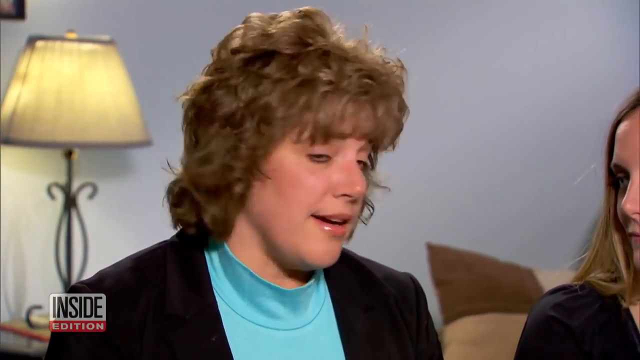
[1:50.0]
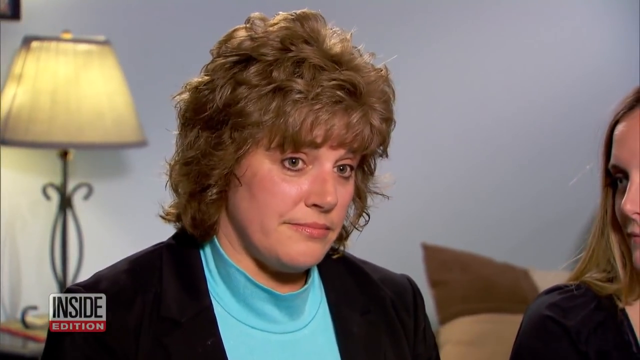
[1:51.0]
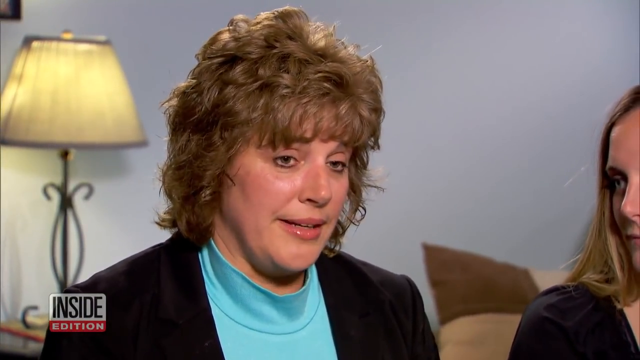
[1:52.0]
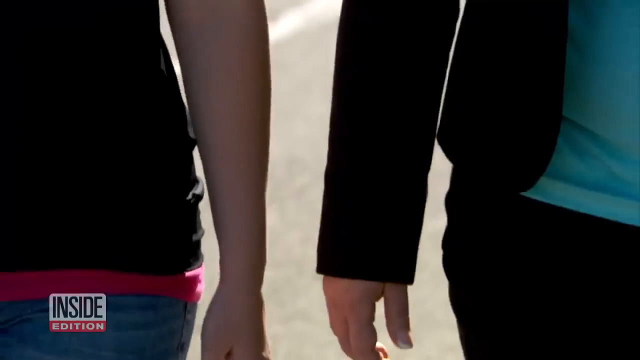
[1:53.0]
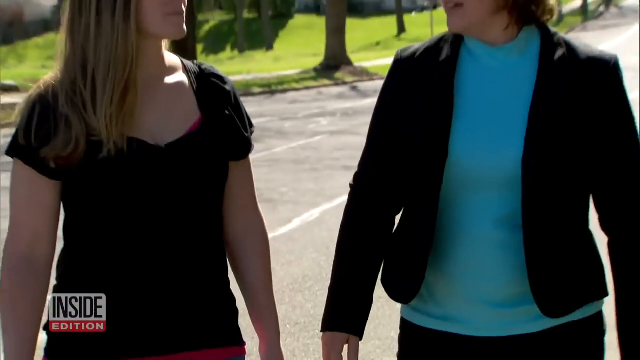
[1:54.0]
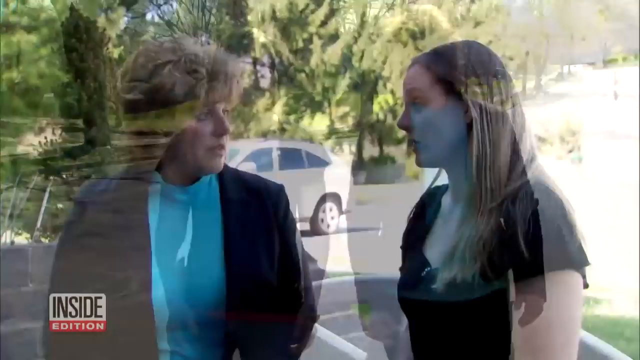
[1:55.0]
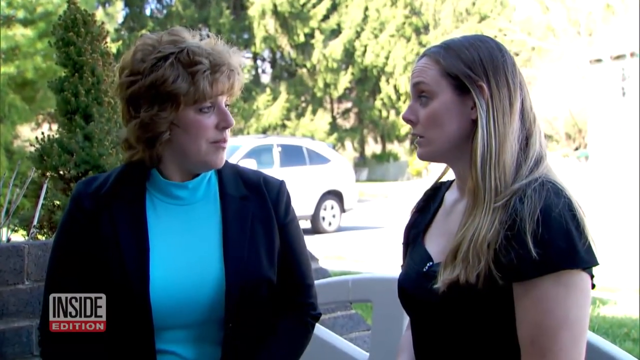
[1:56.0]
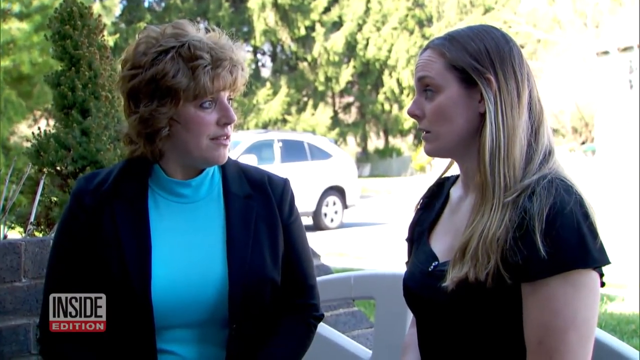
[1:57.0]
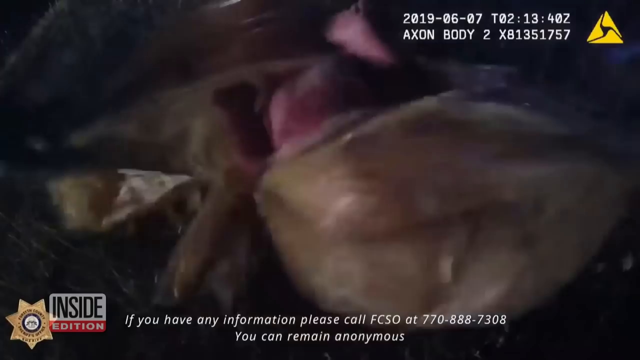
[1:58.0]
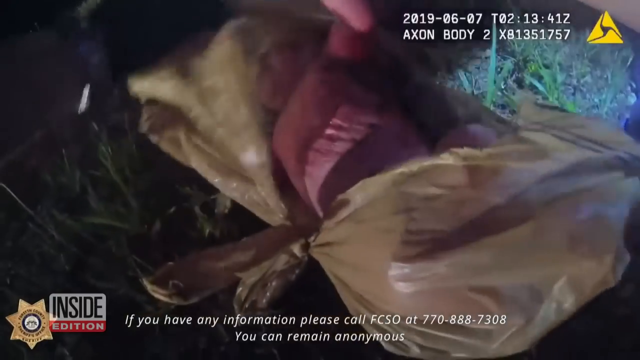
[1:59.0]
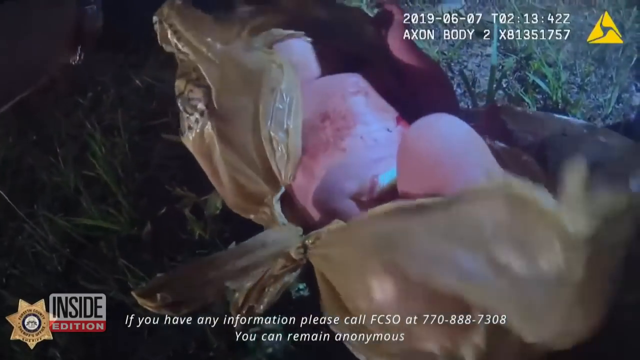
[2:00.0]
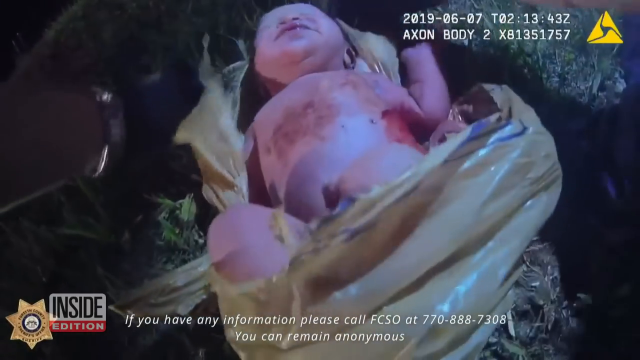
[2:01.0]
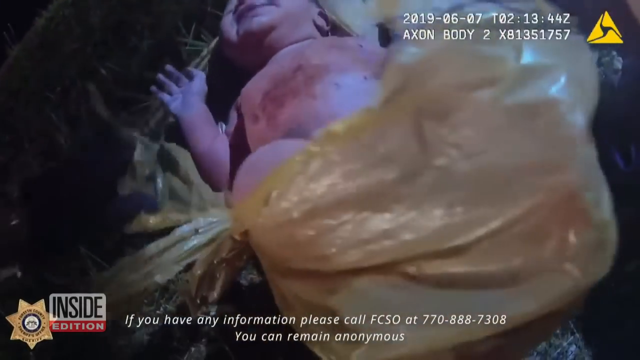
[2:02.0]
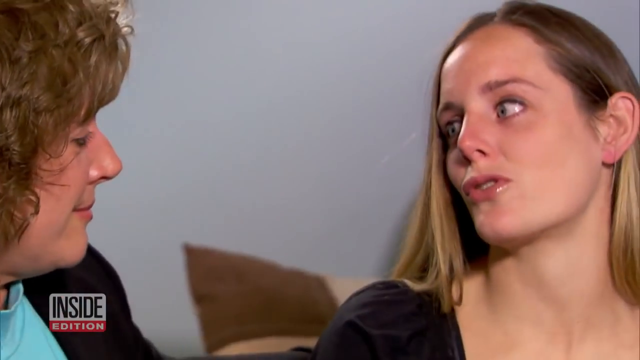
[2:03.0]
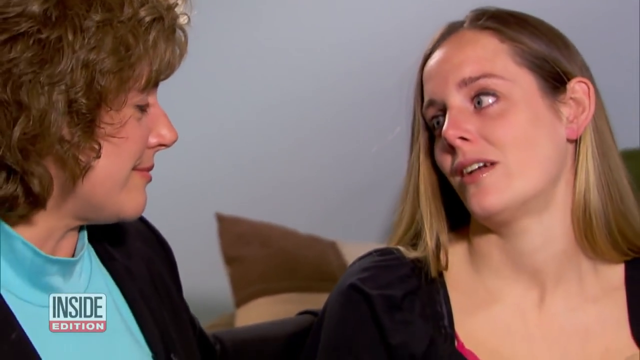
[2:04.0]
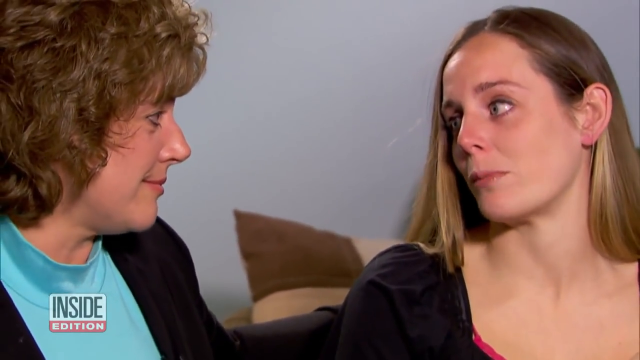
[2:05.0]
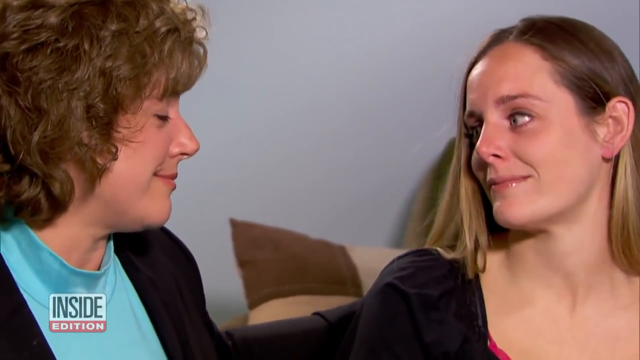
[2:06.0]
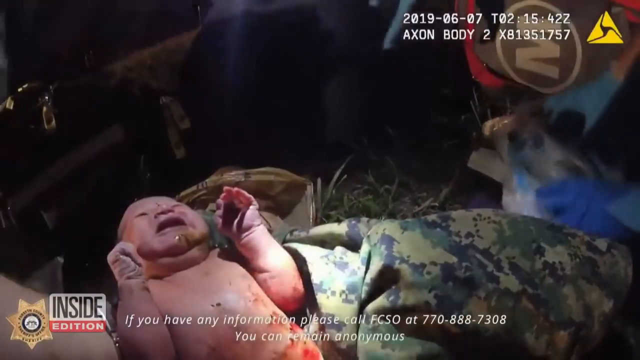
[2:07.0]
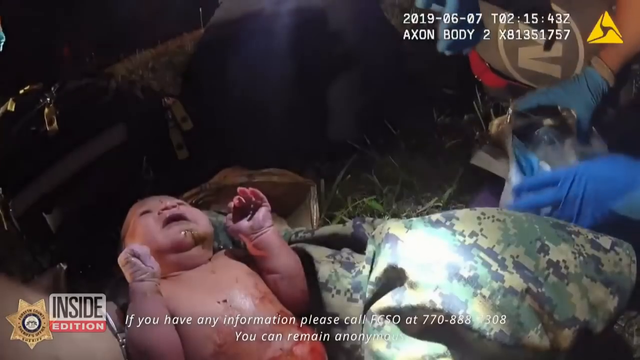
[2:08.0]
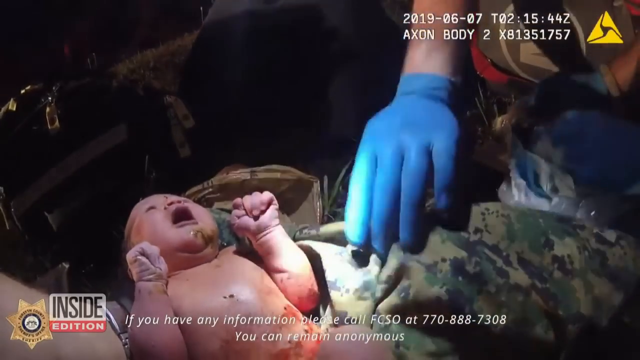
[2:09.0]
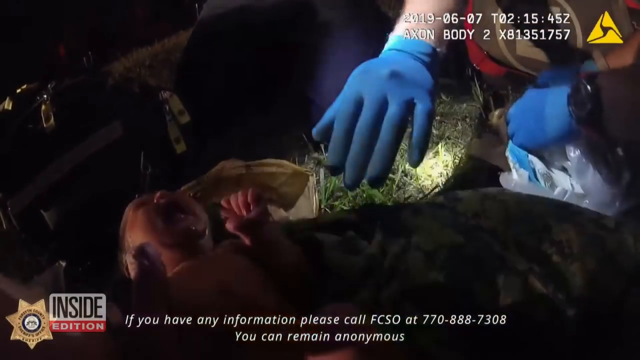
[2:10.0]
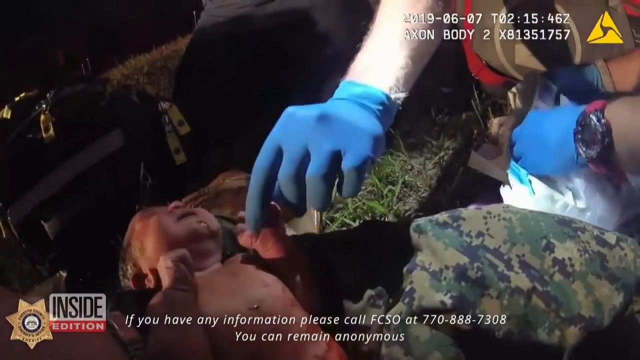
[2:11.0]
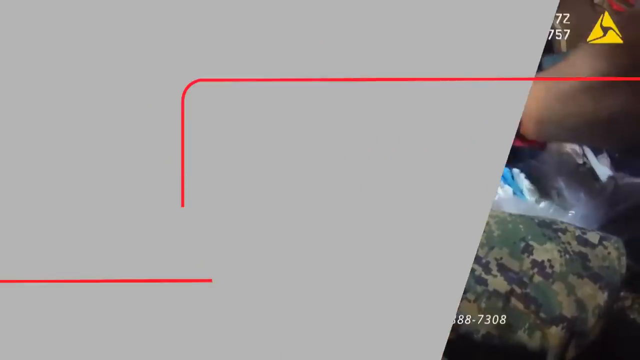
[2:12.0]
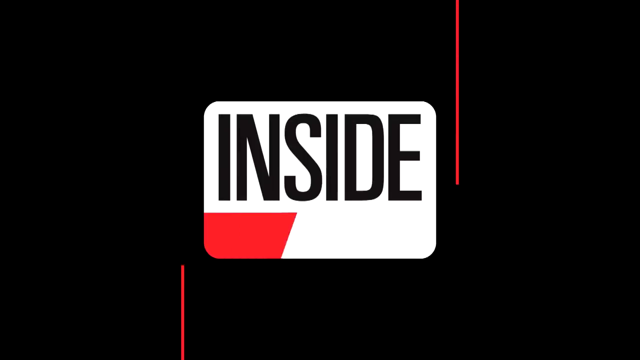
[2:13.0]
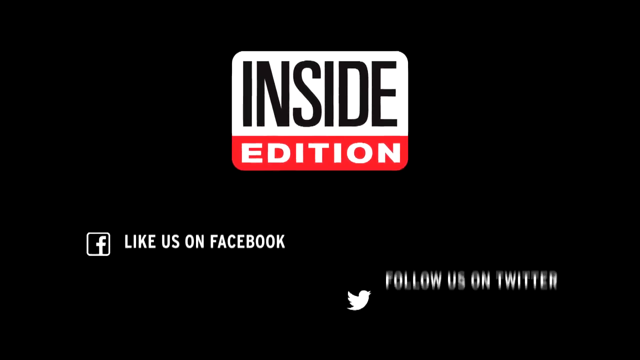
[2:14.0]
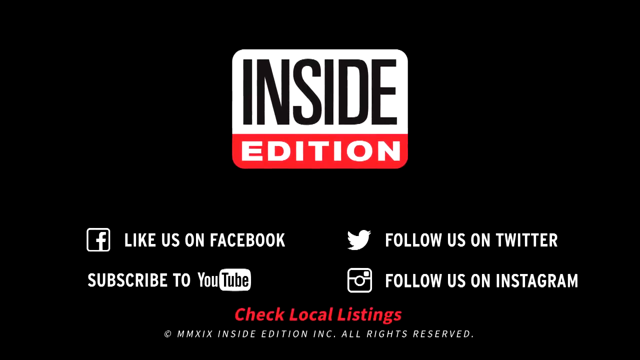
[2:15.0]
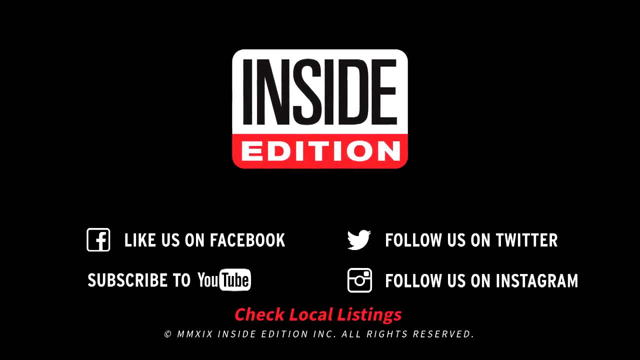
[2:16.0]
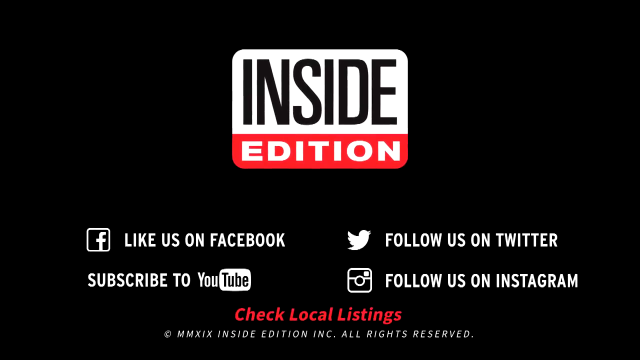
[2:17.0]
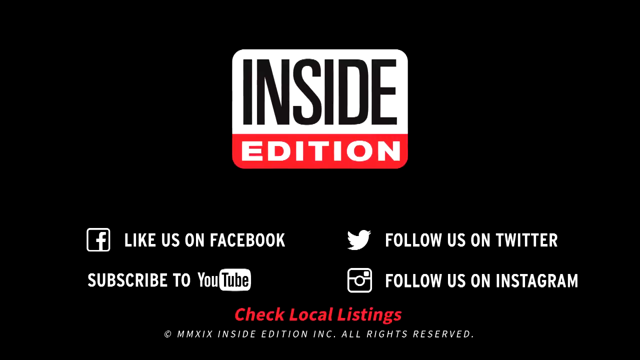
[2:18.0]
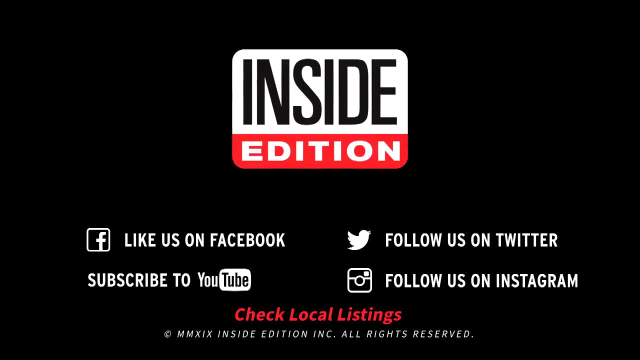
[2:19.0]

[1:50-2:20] The middle-aged woman talks quite a bit to the camera, sitting in what looks like a living room with a lamp on behind her, presumably about leaving a baby years ago and how things turned out. The grown woman who was the baby is on the right side of the frame, talking to her a little. The video cuts to the two walking down the street side by side, their hands near each other but not holding hands, then back to them talking. It then cuts to the present-day baby discovered at the airport, showing once again the brown bag being broken open and the baby inside. One of the first responders takes hold of the baby's hand and is apparently talking to it. The baby is crying, a little bloody, and has dirt on it, while responders set up equipment to check it and make sure it is healthy.